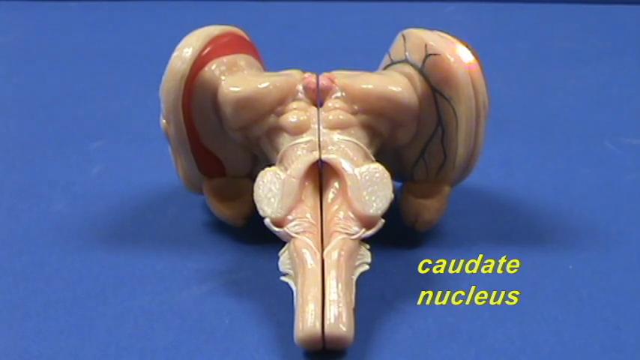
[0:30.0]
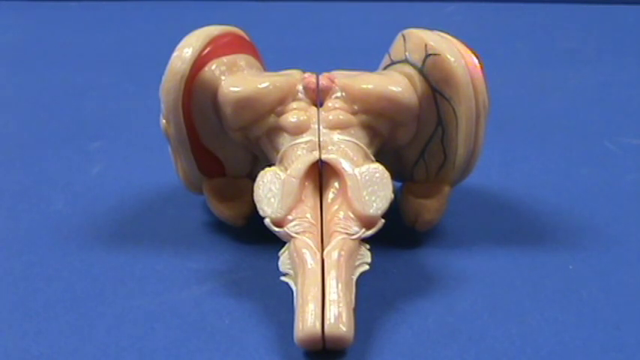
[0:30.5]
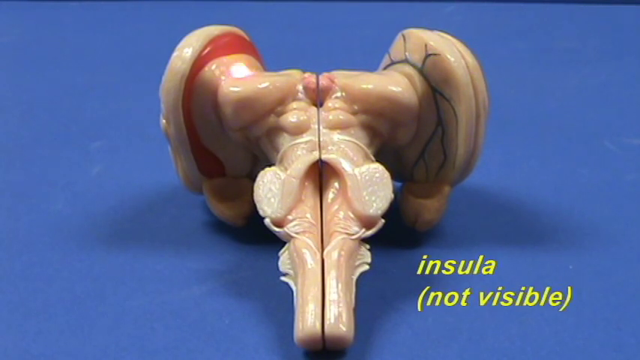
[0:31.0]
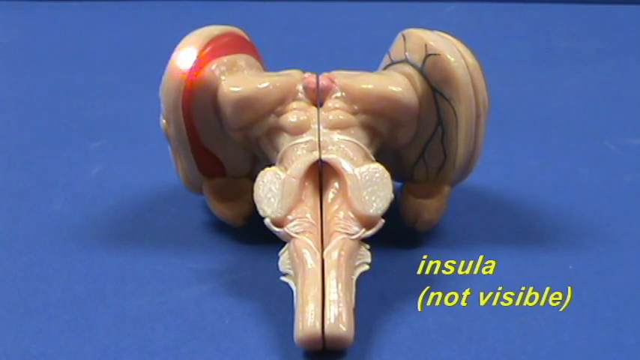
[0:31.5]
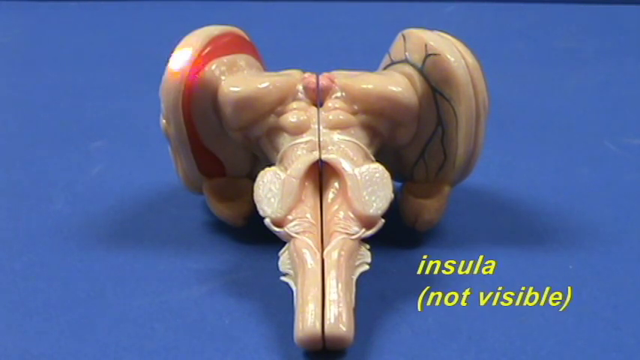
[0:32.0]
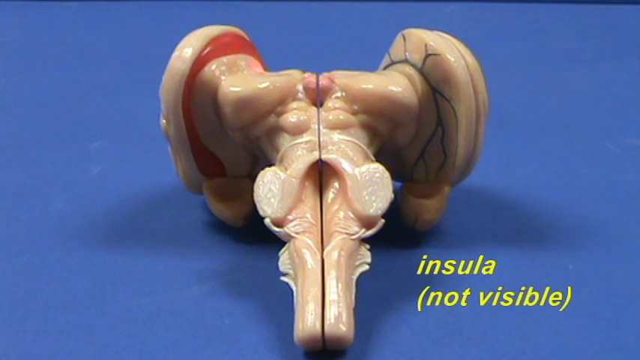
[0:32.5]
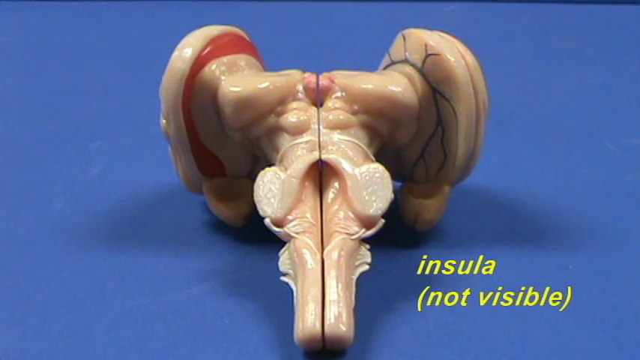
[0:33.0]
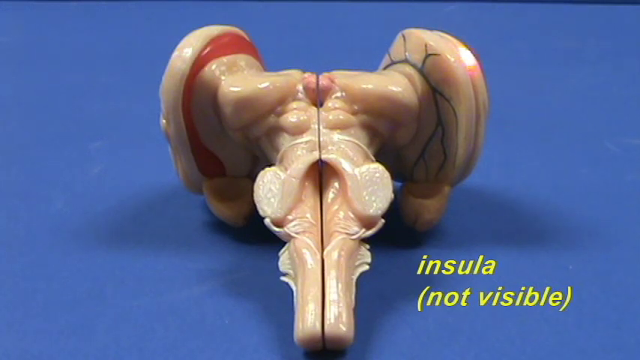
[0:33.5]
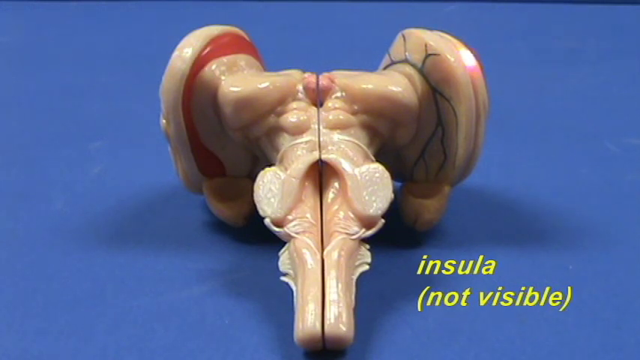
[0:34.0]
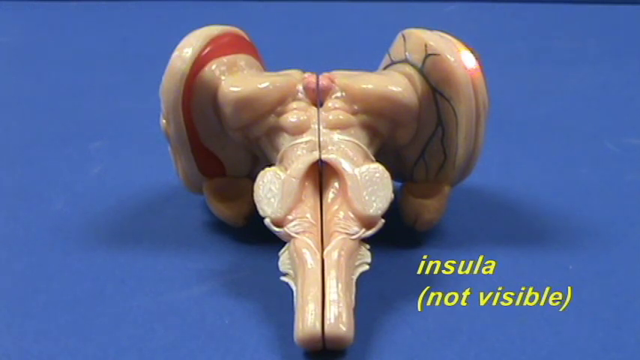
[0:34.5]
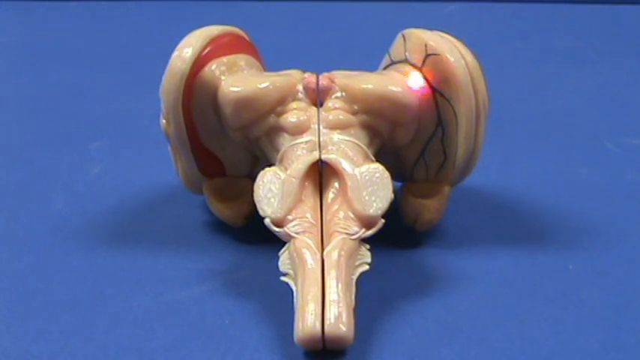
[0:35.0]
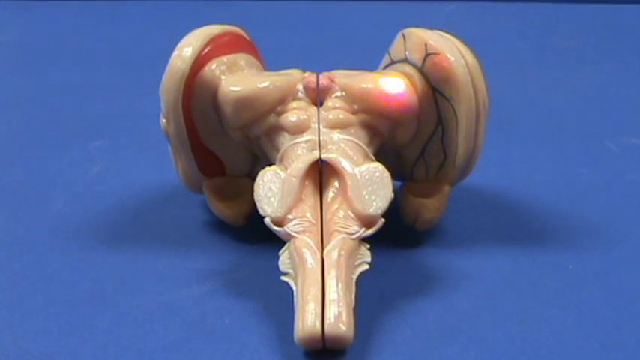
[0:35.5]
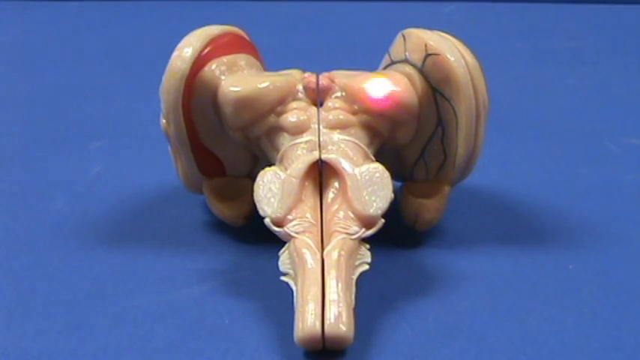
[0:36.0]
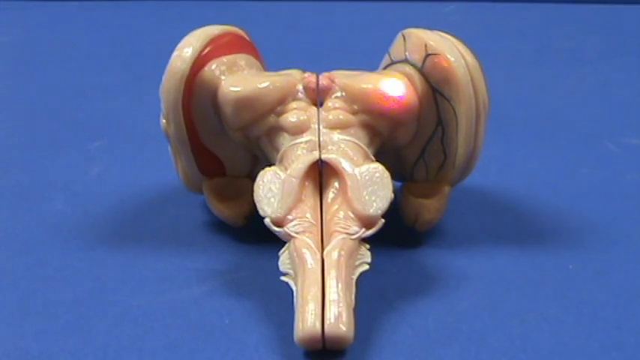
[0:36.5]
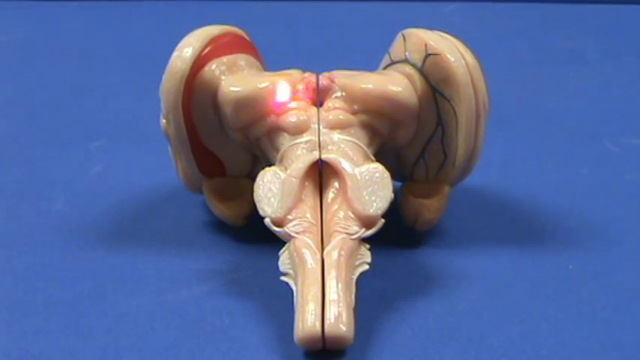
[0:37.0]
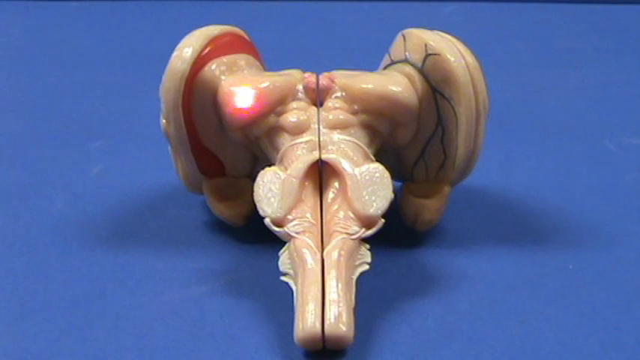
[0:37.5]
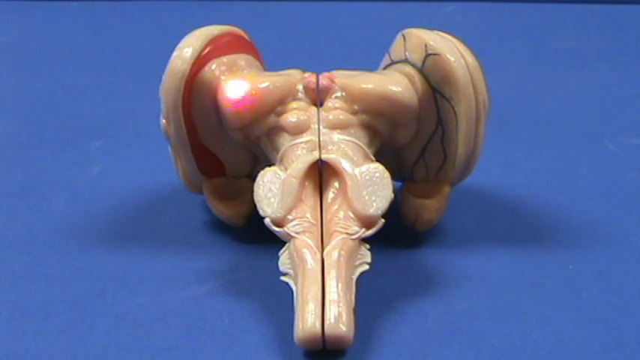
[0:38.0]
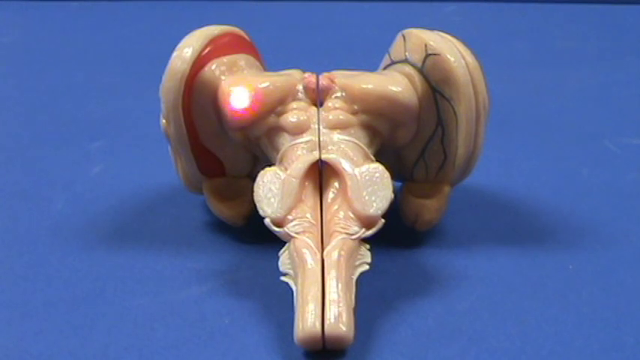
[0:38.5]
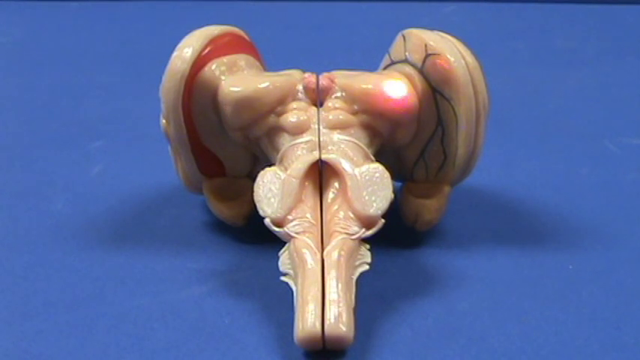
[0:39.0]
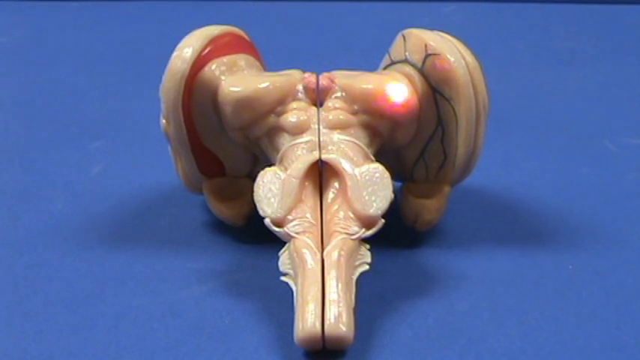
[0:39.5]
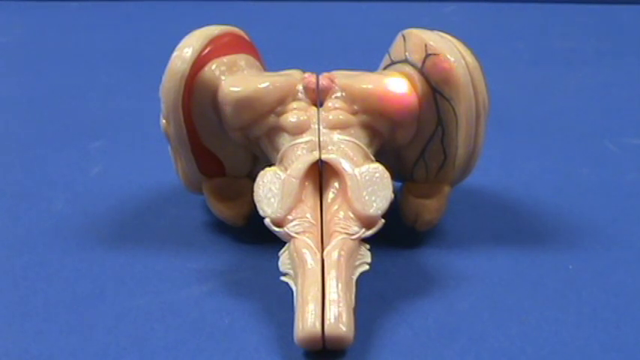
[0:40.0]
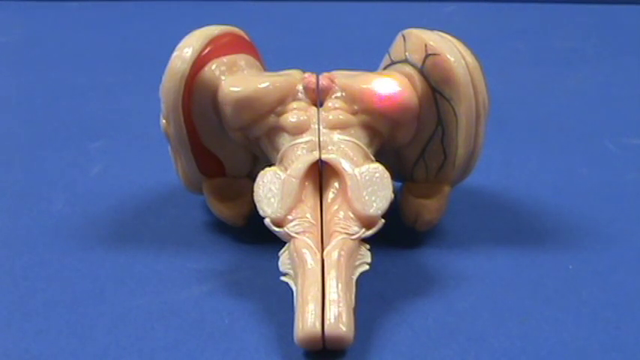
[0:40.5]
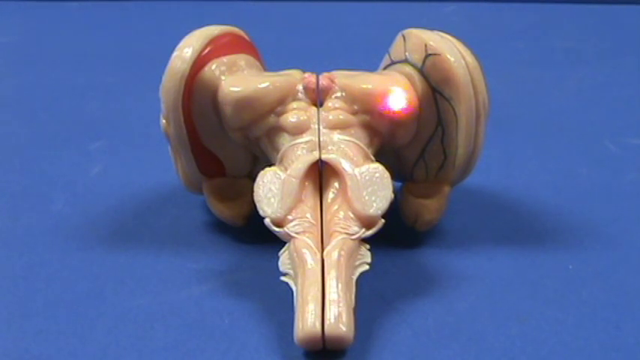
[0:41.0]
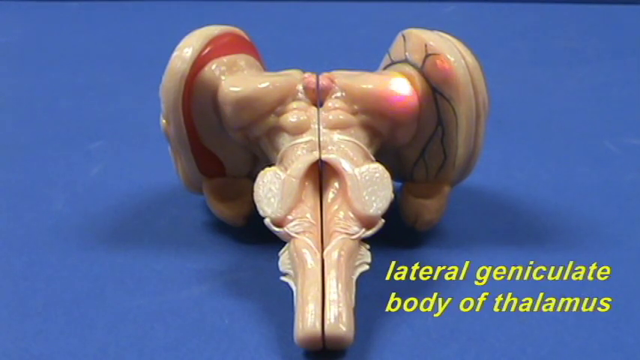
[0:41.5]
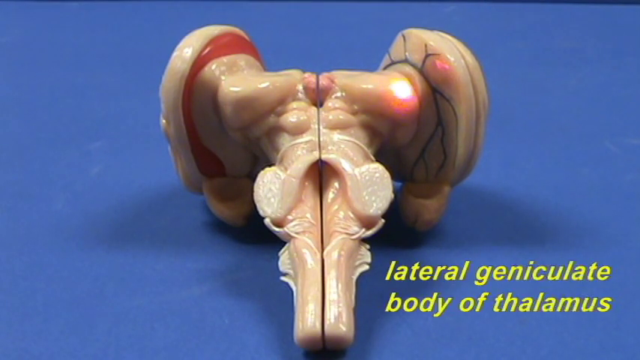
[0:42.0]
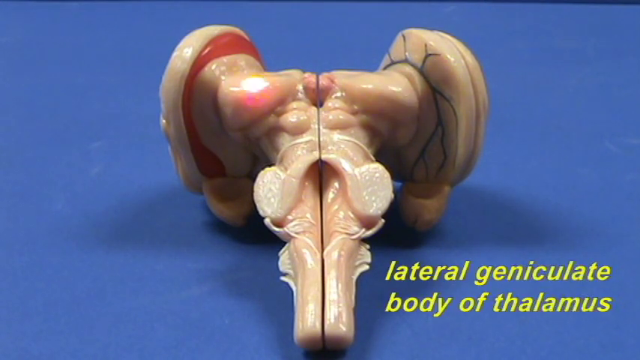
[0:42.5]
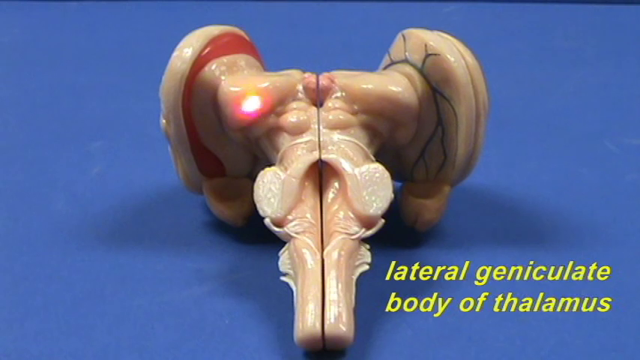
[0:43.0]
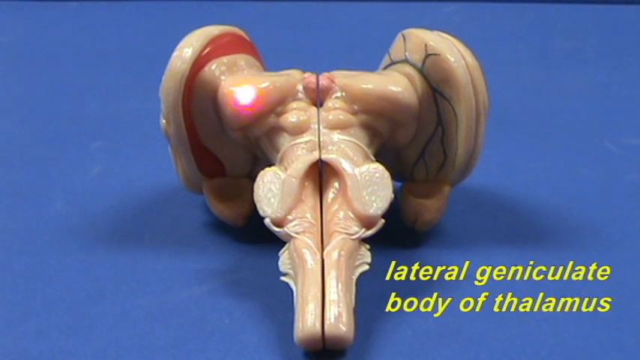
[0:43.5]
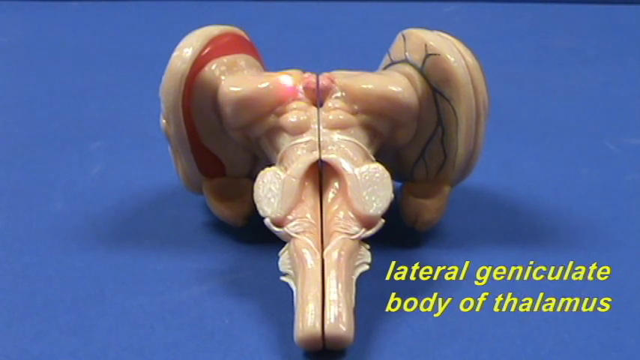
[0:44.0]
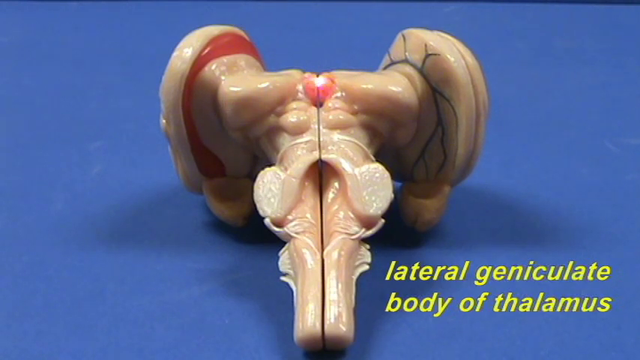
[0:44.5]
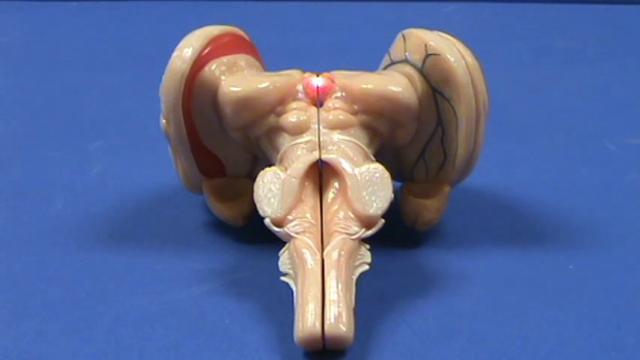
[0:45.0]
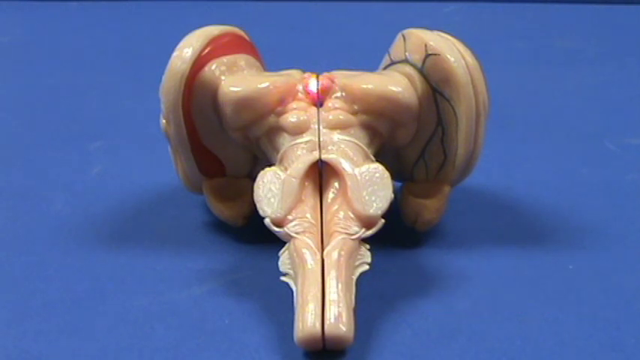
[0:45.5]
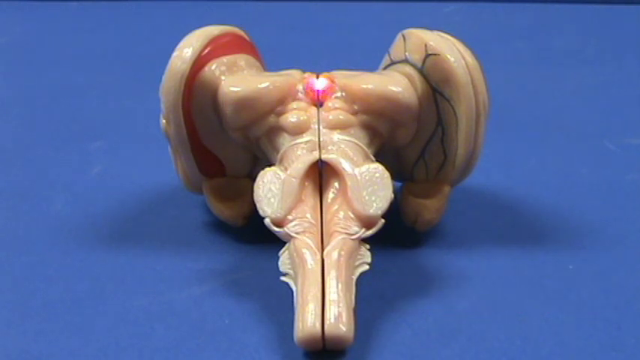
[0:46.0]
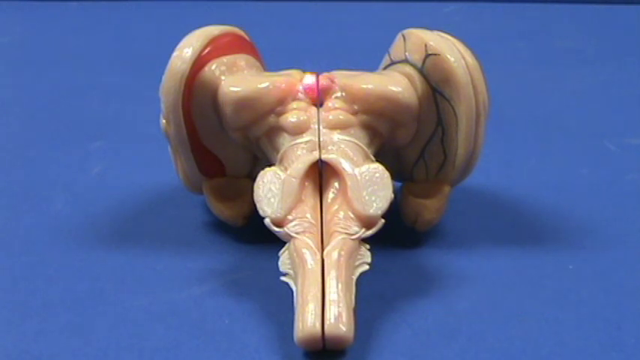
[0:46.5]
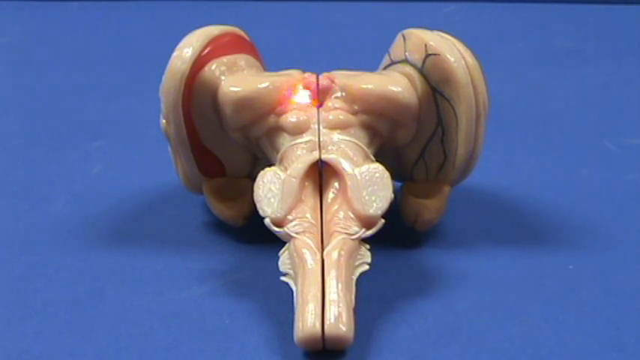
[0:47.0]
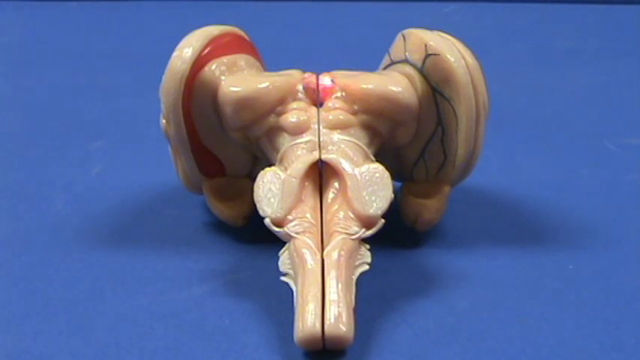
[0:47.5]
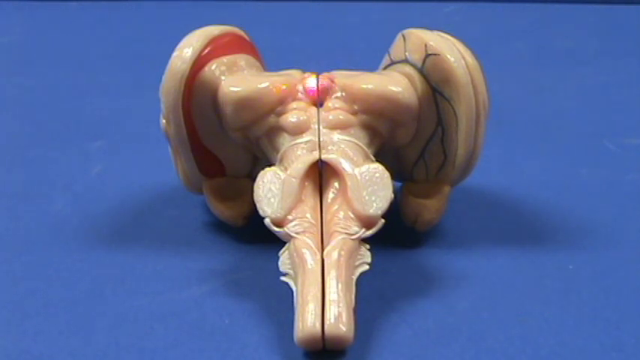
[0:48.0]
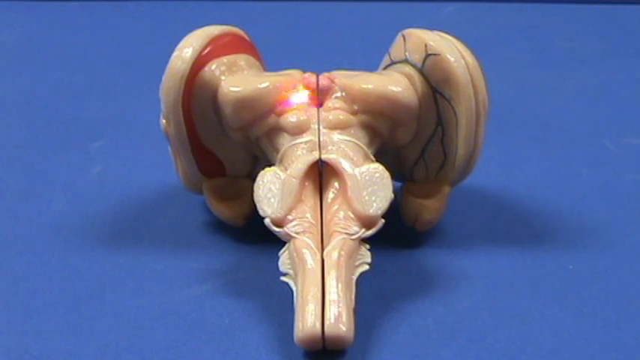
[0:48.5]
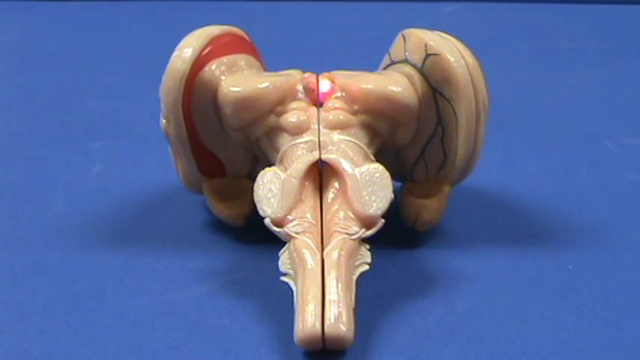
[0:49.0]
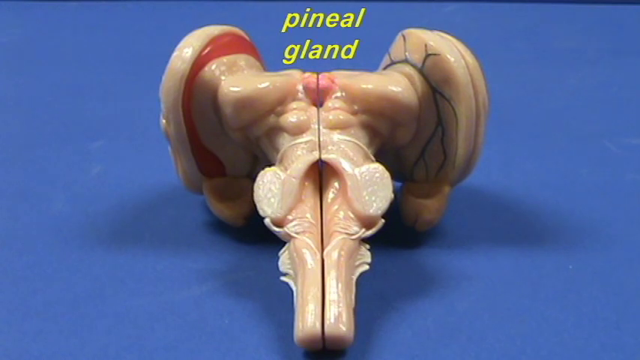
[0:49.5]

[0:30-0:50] The laser pointer moves from the caudate nucleus to the outside of the two ends at the top of the brain stem that look like the ends of the T, and the word underneath on the right-hand side changes to "insula." The laser then goes to the two pieces attaching to these outer ends, like the lines forming the top of the letter T that connect to the ear-like pieces. It circles them from one side to the other, and the words at the bottom change to "lateral geniculate body of thalamus." The words then go away, and the cursor moves to the center portion between these two parts. As the laser circles a tiny opening at the center, like the center of the top of the letter T, words appear on screen above the cursor reading "pineal gland."